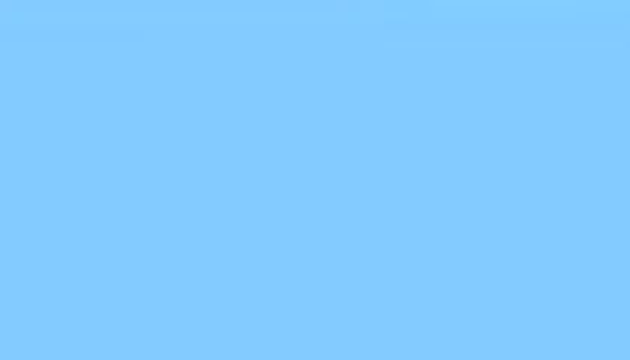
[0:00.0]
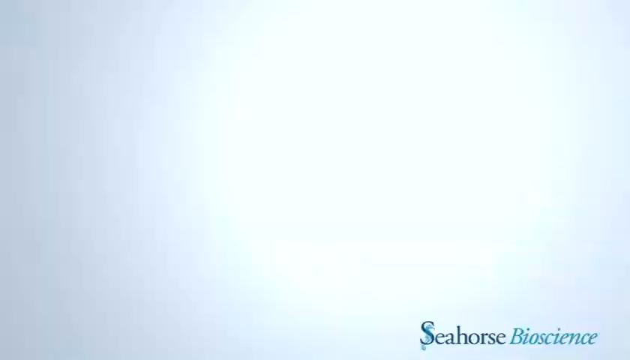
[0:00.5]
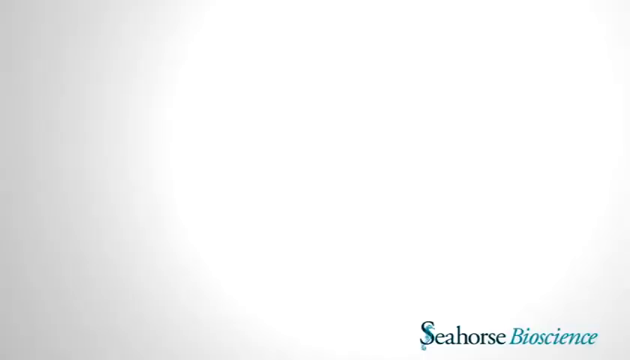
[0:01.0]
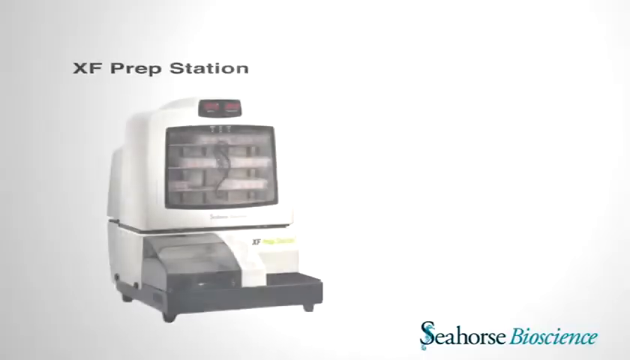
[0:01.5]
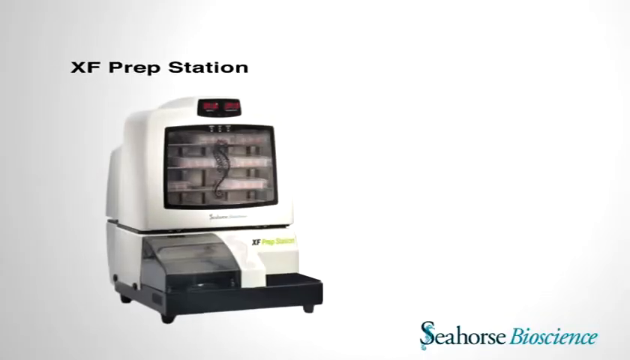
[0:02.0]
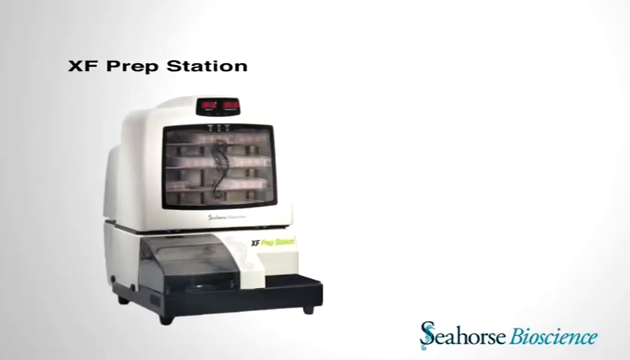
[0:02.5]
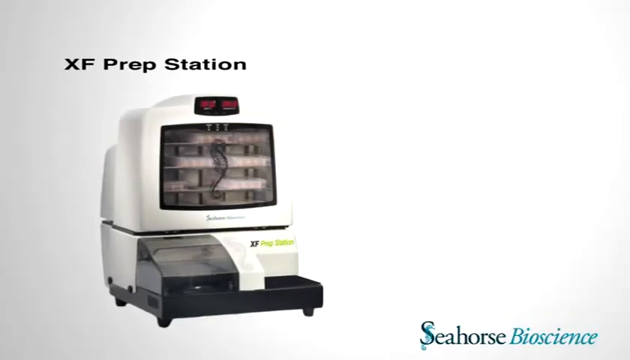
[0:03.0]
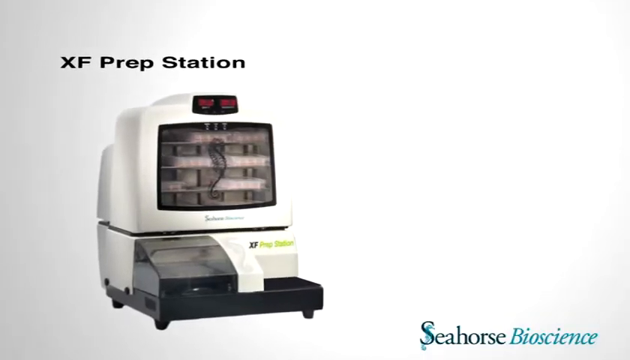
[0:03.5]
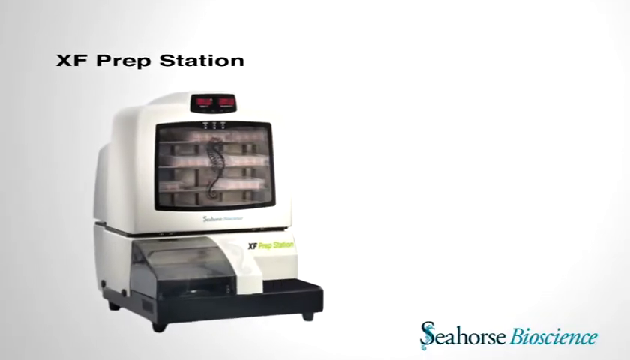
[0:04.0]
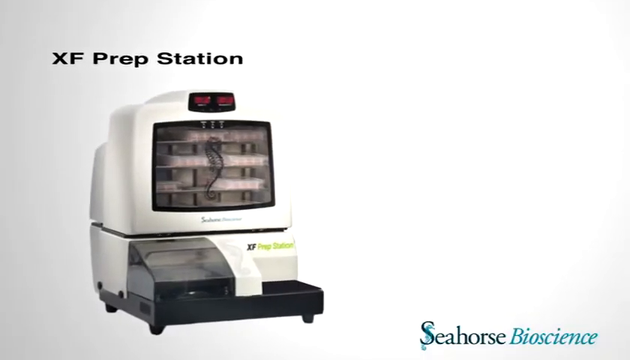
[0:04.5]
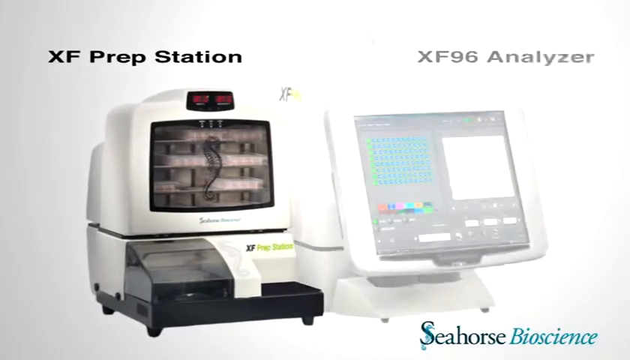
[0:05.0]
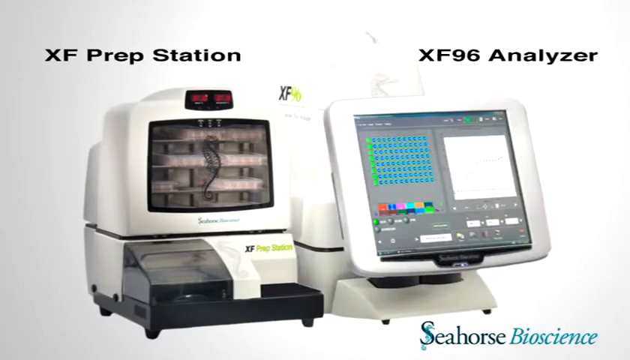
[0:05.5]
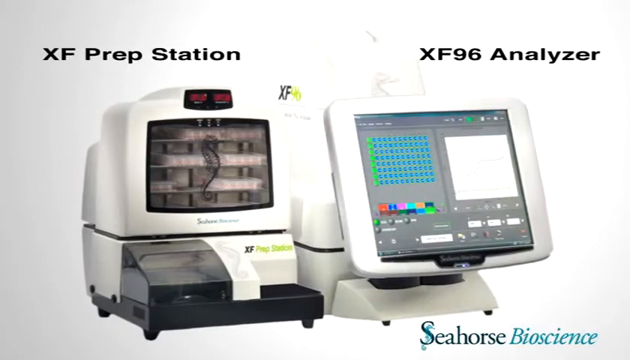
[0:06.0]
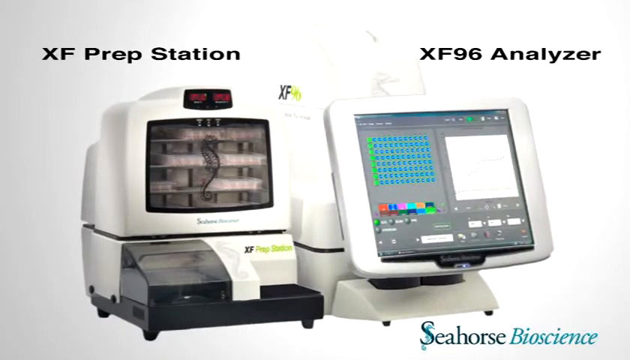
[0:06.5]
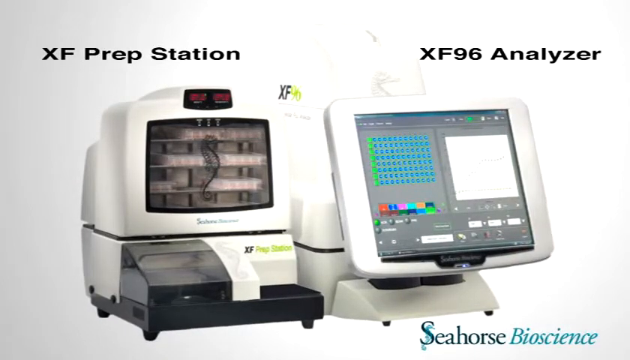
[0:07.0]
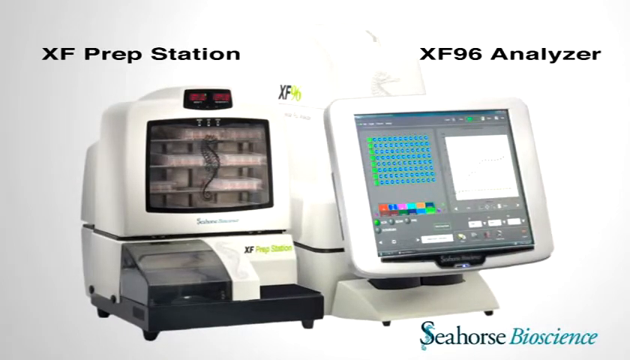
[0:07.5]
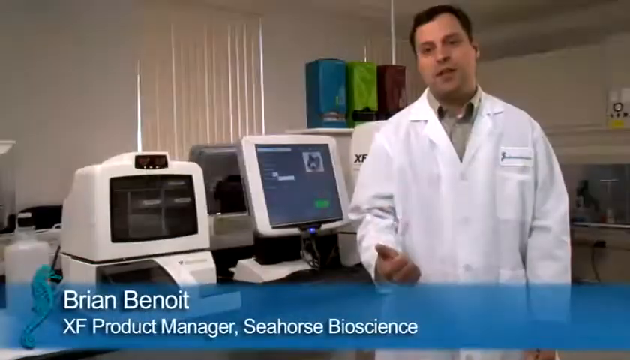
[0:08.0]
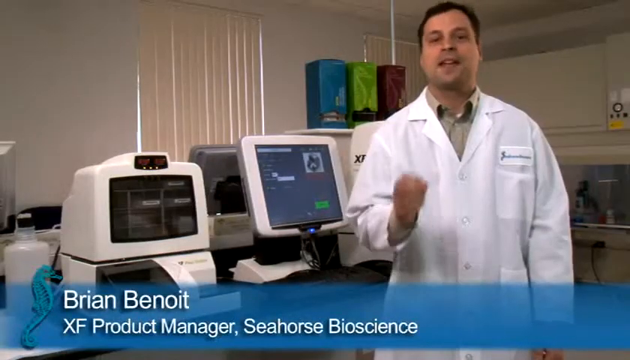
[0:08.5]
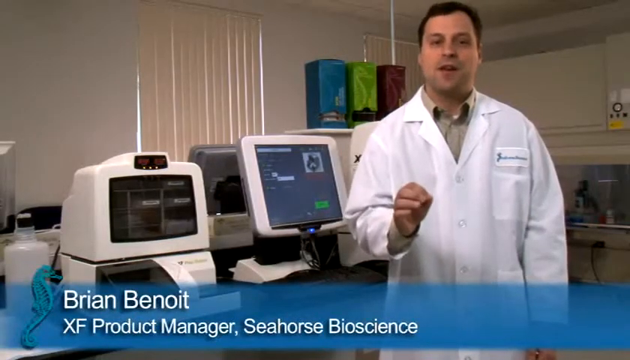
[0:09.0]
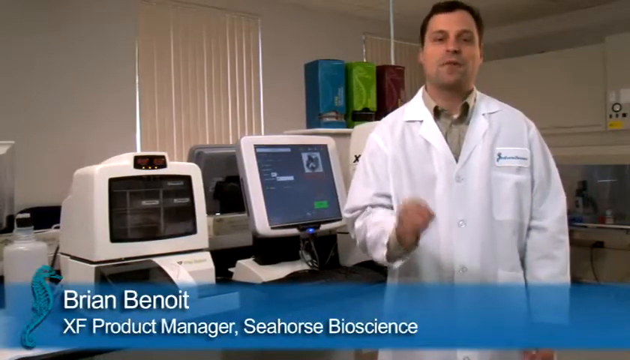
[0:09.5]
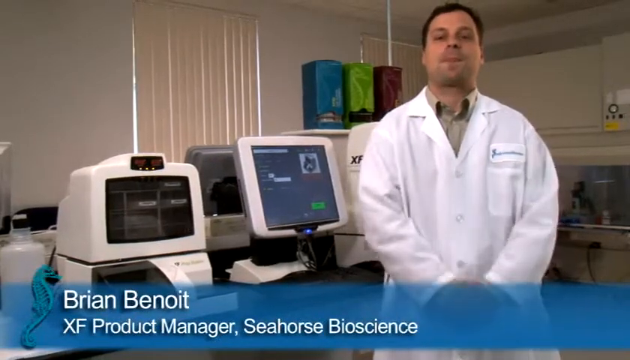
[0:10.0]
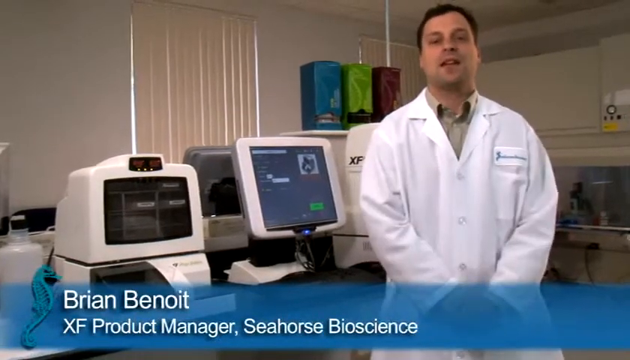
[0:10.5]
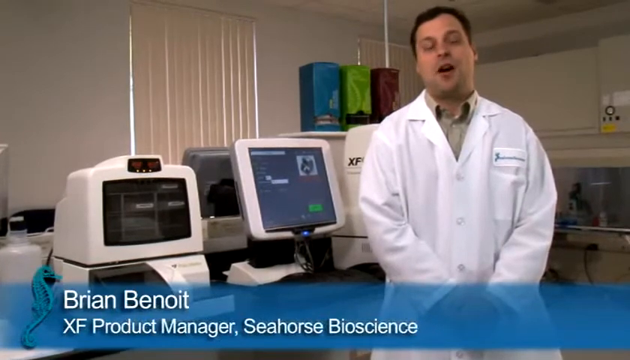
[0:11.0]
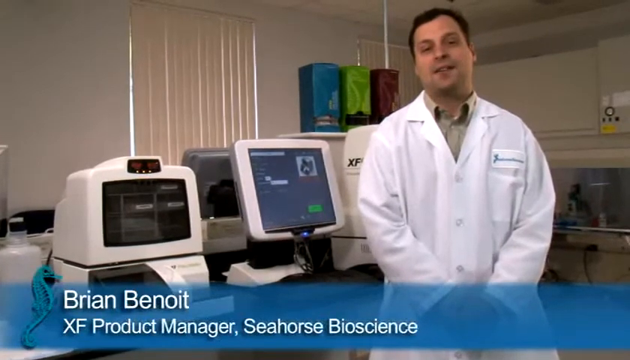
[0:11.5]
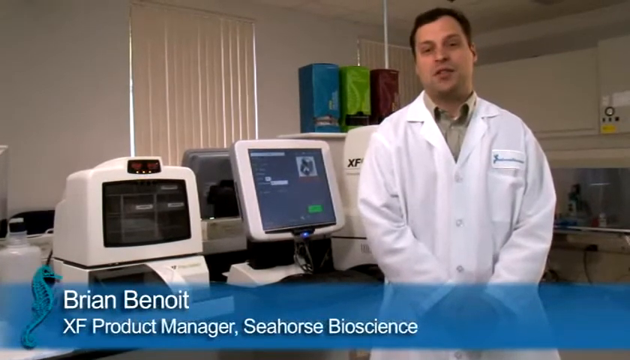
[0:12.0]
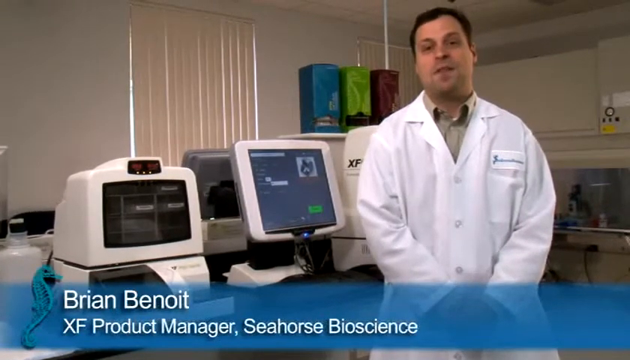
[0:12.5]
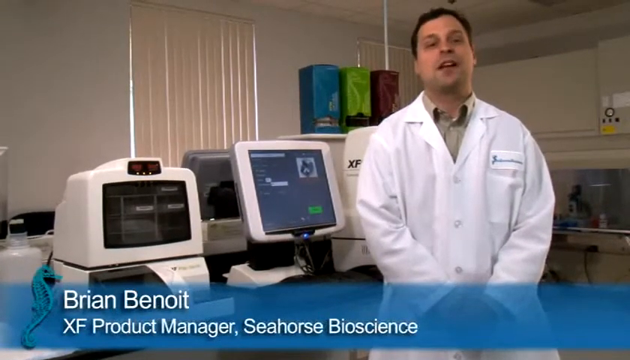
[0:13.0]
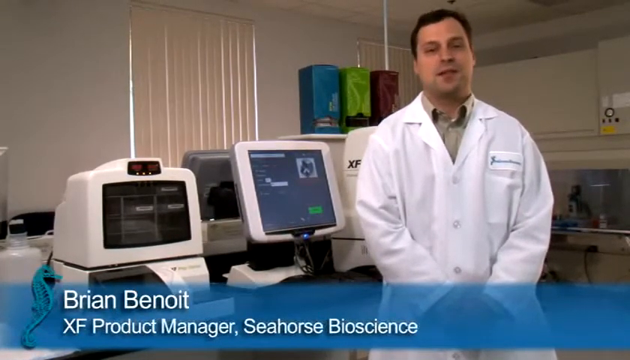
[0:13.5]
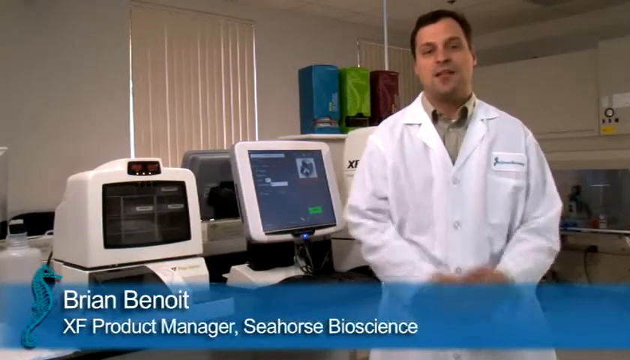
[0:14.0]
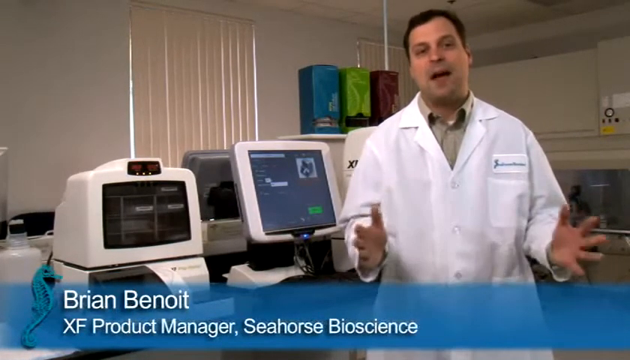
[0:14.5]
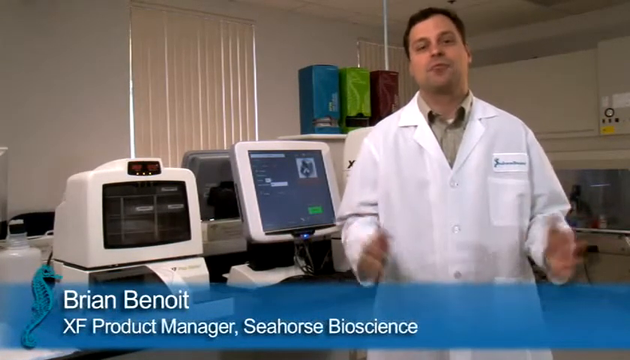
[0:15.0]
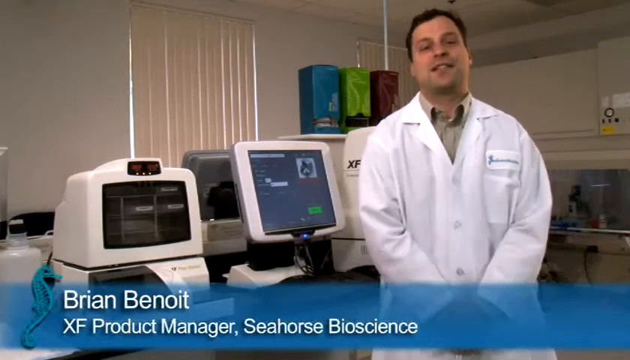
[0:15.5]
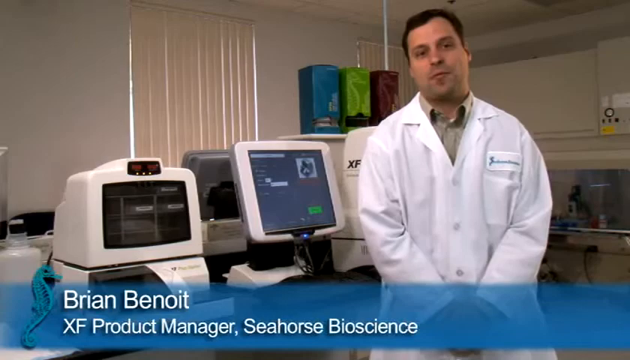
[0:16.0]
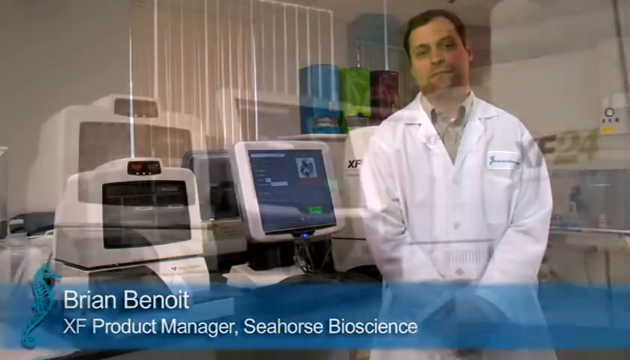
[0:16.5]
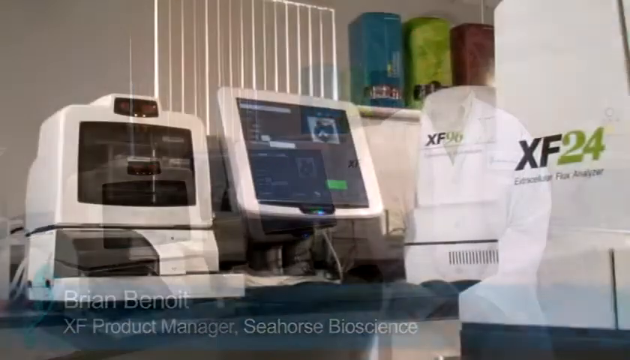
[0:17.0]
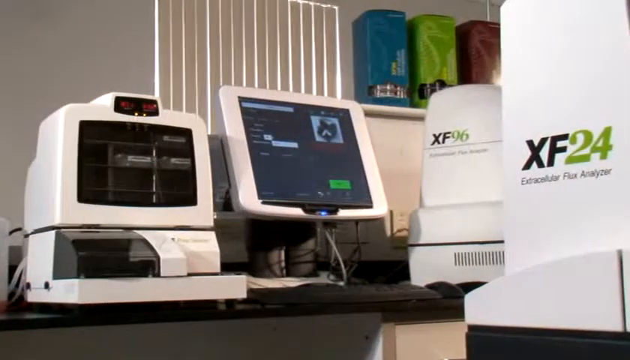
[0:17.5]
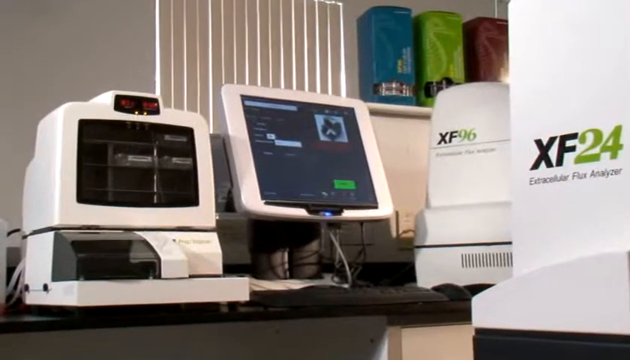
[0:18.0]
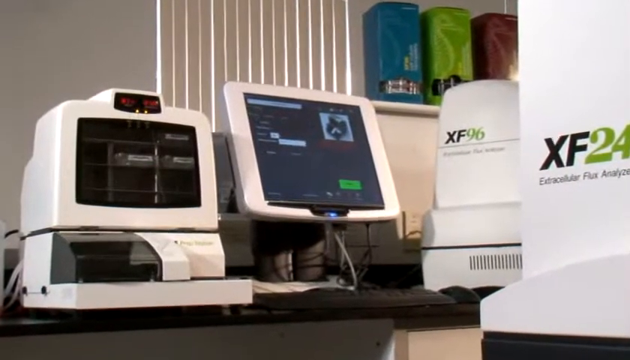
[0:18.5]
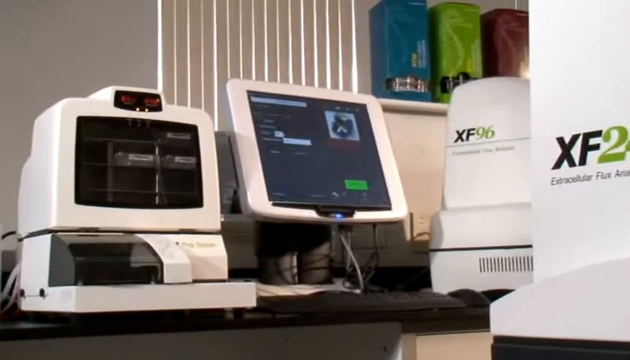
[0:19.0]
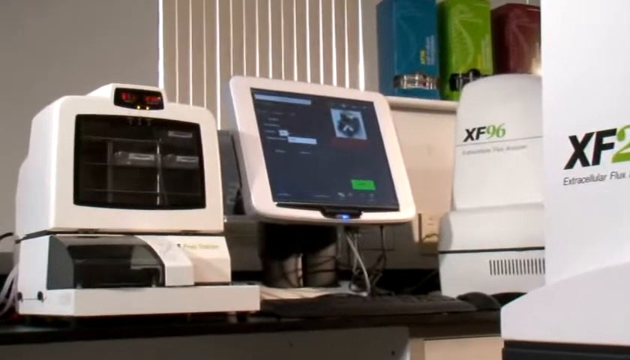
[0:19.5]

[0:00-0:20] A white XF prep station is shown, and beside it another image pops up of an item called an XF96 analyzer; both machines are white. Next, a man speaks in a video. He wears a white lab coat and stands beside the two machines, which are to his left side. In the background is a room with the window blinds closed. The man has short dark hair and wears a pastel olive green shirt underneath his lab coat, and he is seen from the head to the waist. His name, "Brian Benoit", is written in white text in the lower left corner. As he speaks, he gestures slightly with his hands. Next there is a close-up view of the two machines again, this time on a countertop in front of the window blinds.